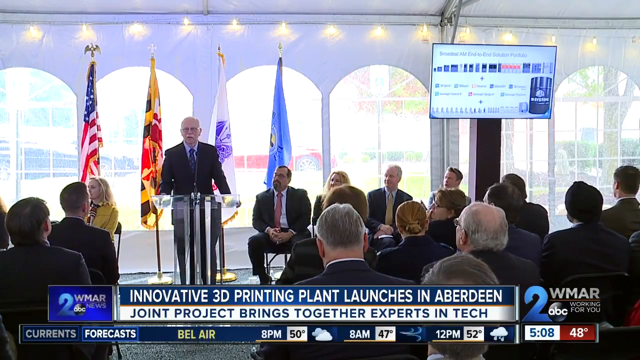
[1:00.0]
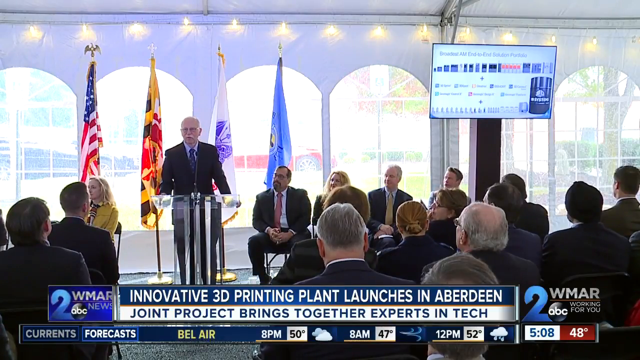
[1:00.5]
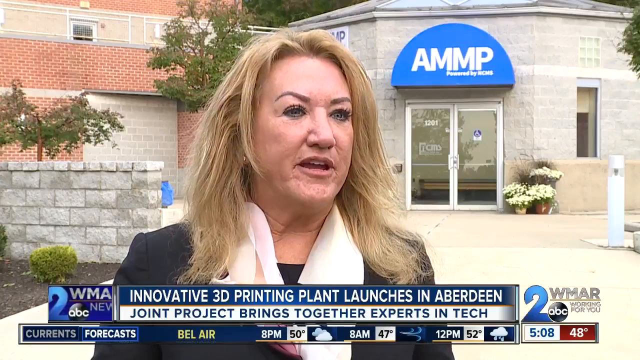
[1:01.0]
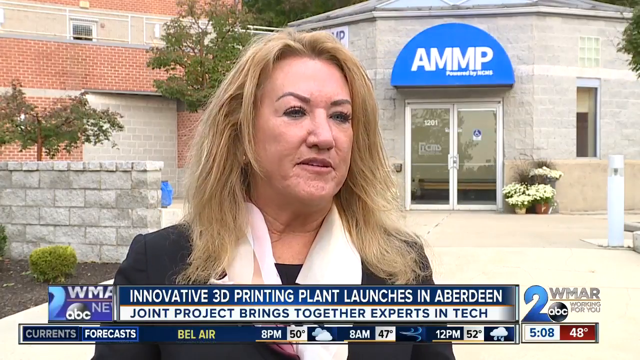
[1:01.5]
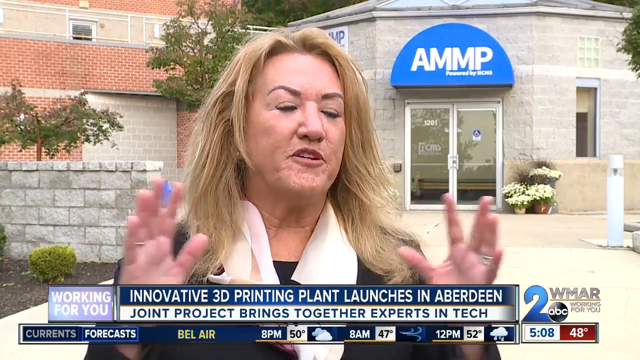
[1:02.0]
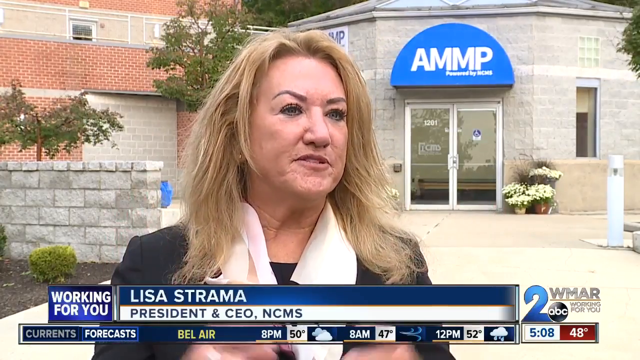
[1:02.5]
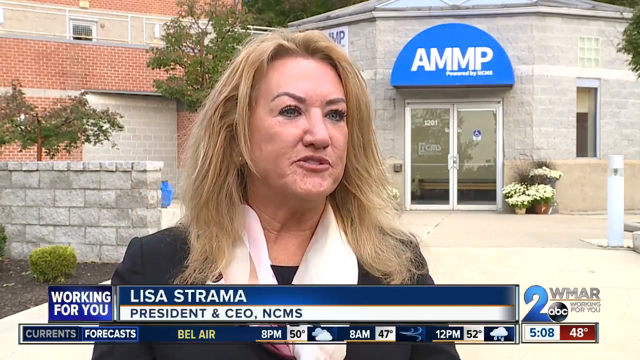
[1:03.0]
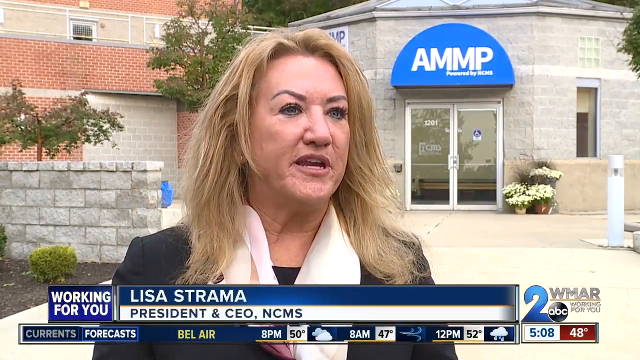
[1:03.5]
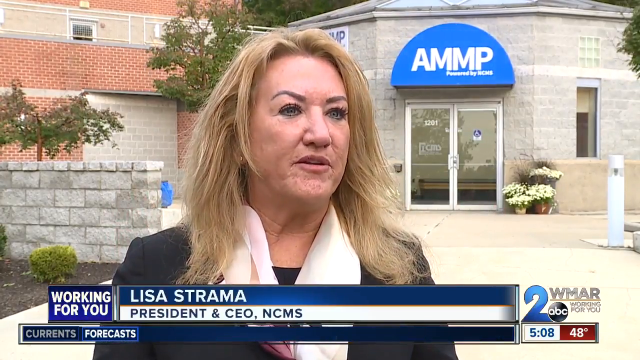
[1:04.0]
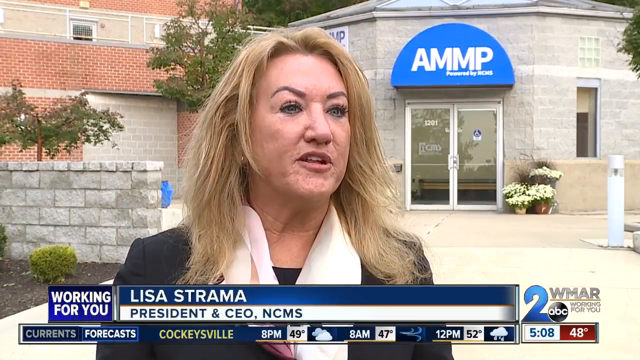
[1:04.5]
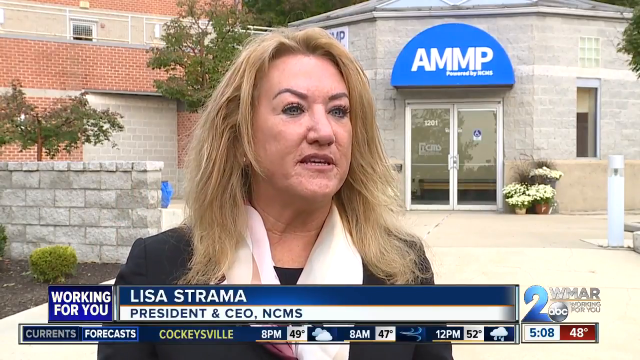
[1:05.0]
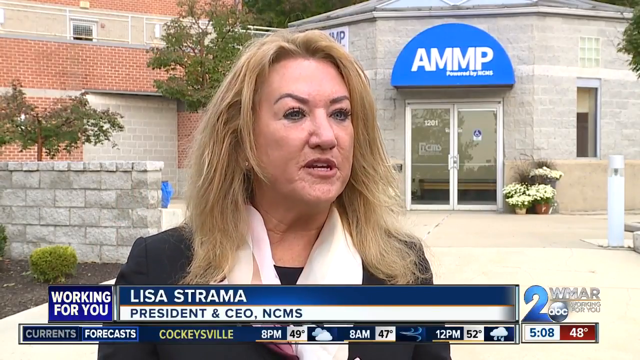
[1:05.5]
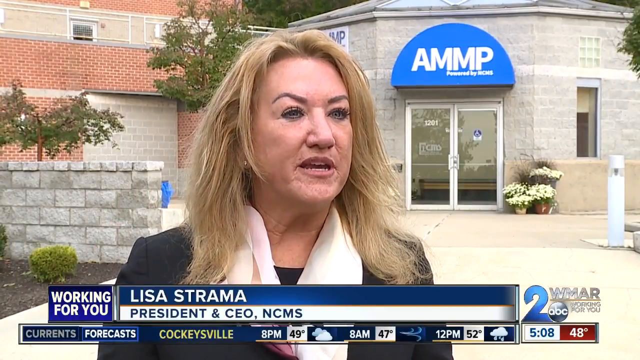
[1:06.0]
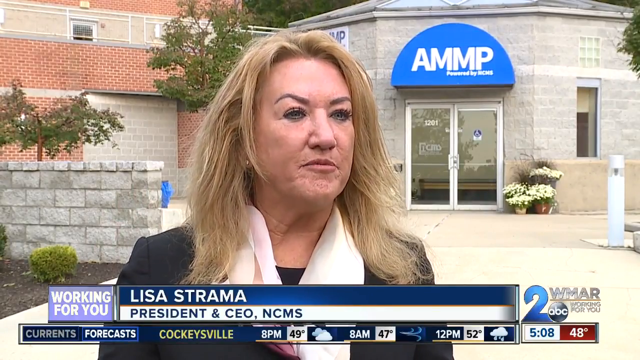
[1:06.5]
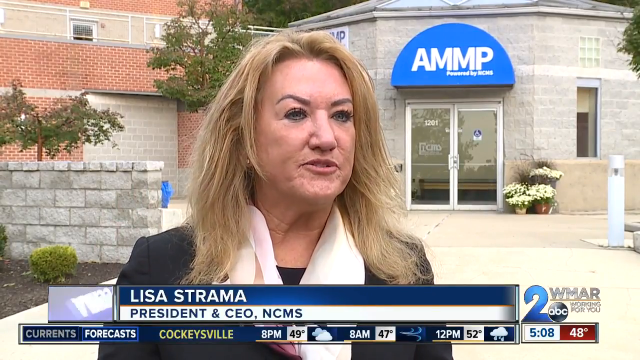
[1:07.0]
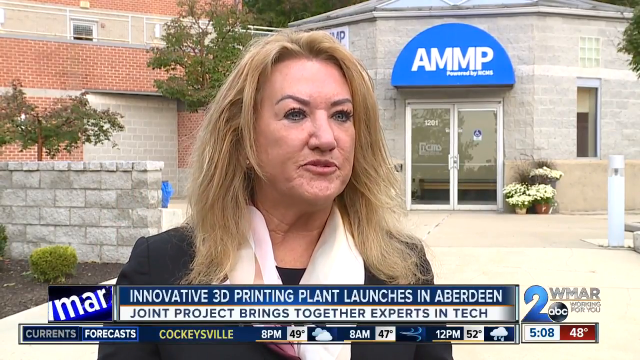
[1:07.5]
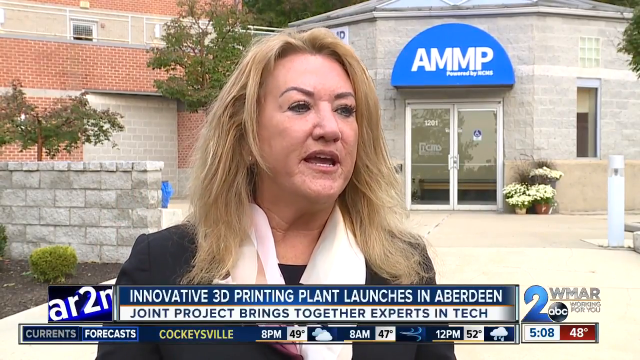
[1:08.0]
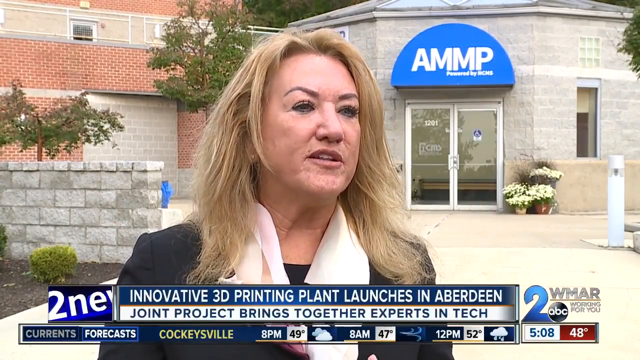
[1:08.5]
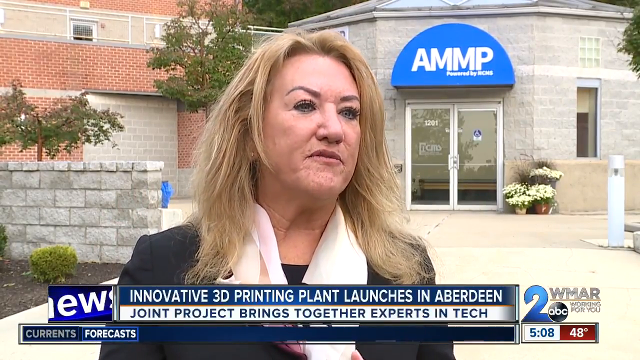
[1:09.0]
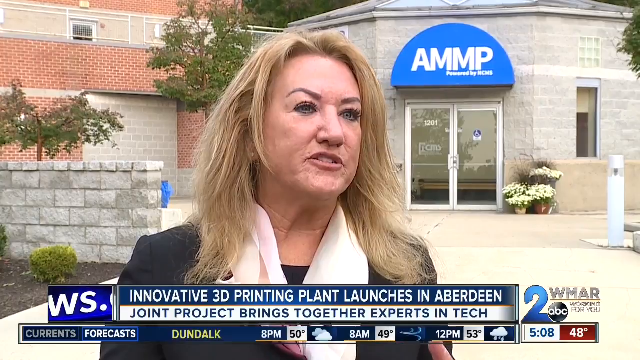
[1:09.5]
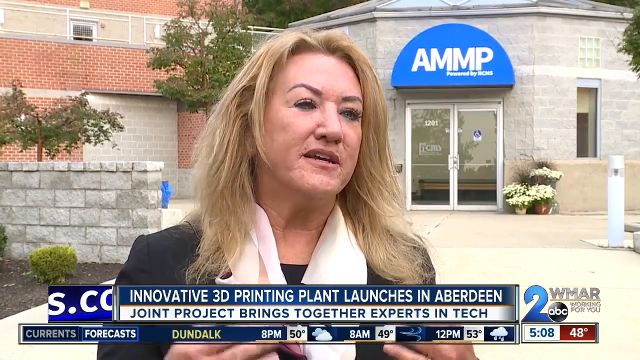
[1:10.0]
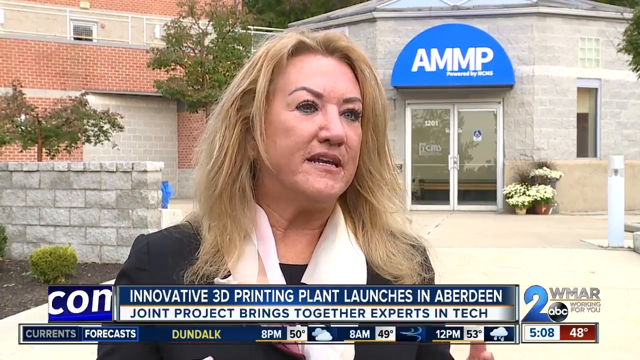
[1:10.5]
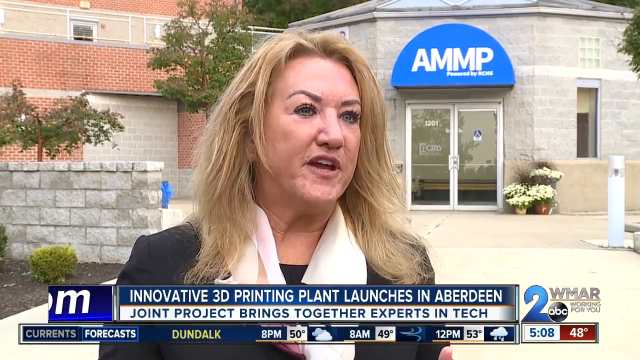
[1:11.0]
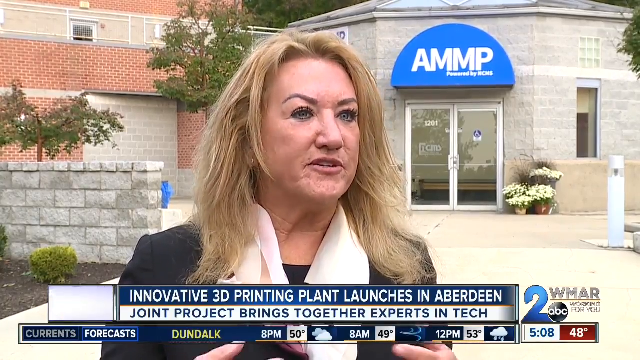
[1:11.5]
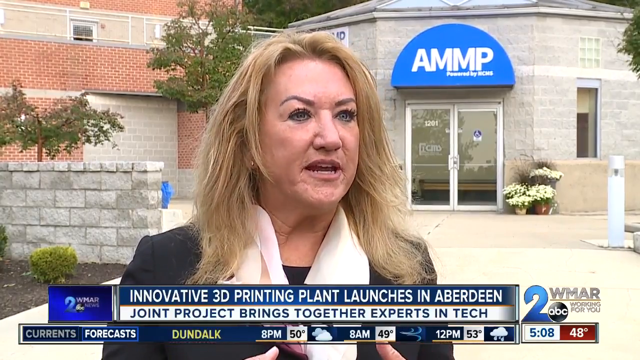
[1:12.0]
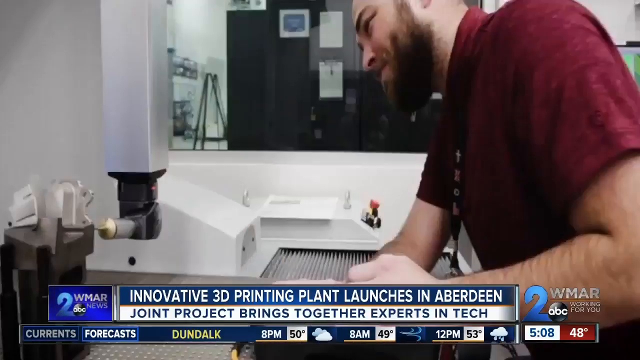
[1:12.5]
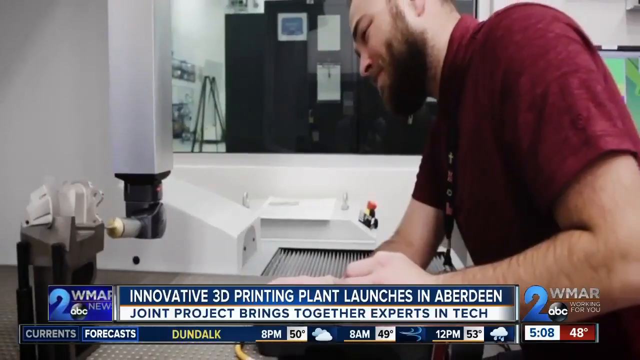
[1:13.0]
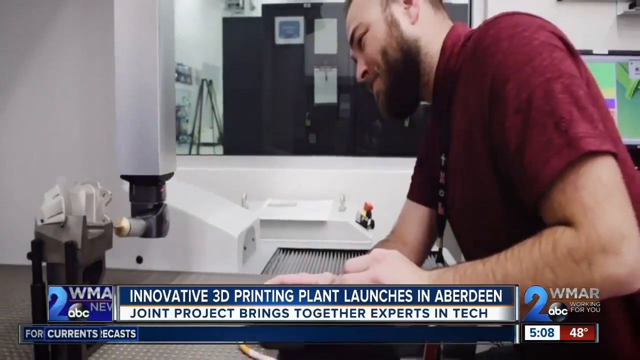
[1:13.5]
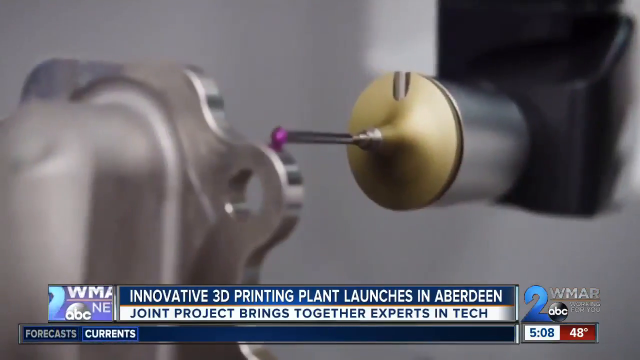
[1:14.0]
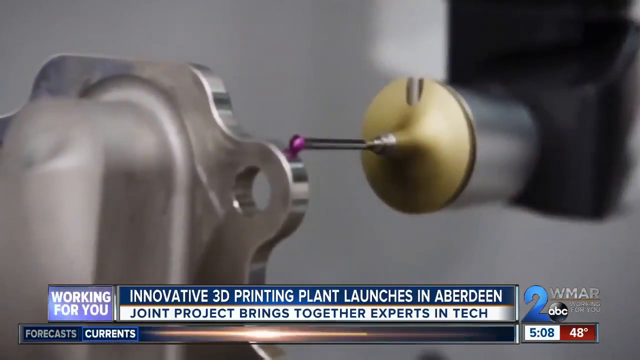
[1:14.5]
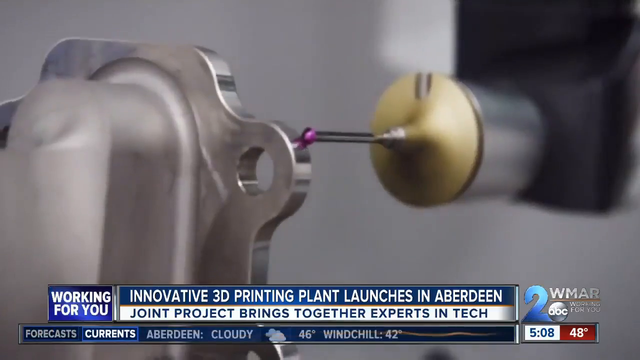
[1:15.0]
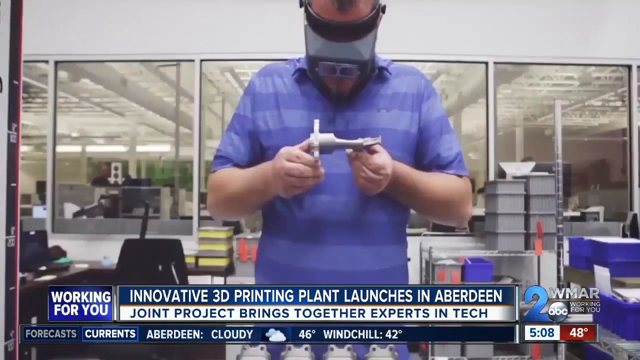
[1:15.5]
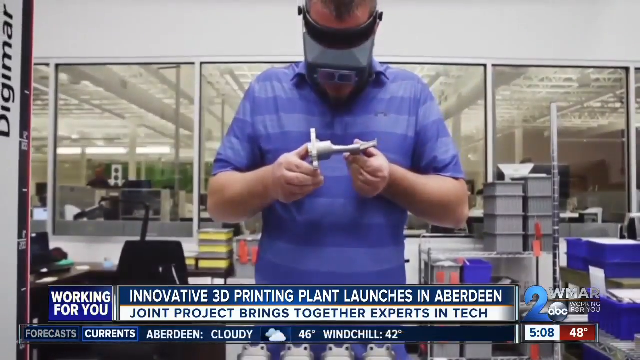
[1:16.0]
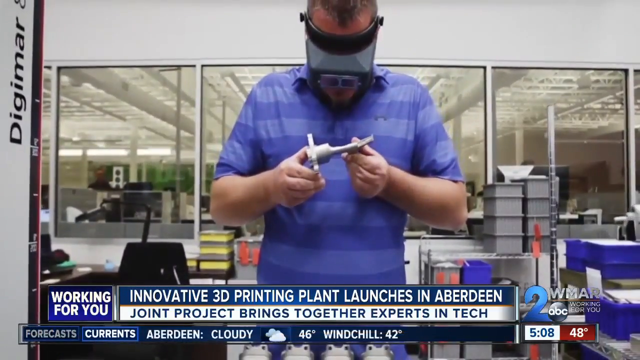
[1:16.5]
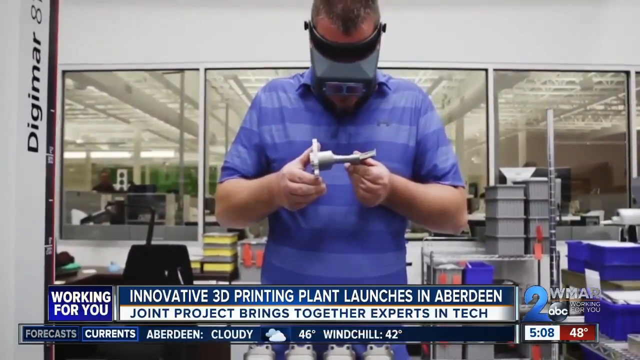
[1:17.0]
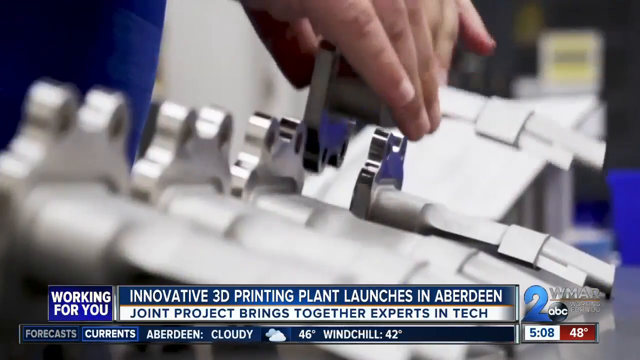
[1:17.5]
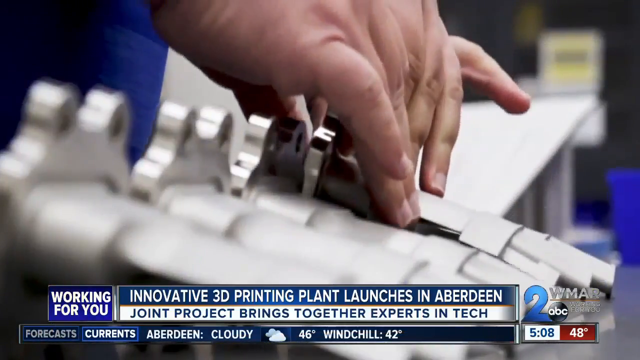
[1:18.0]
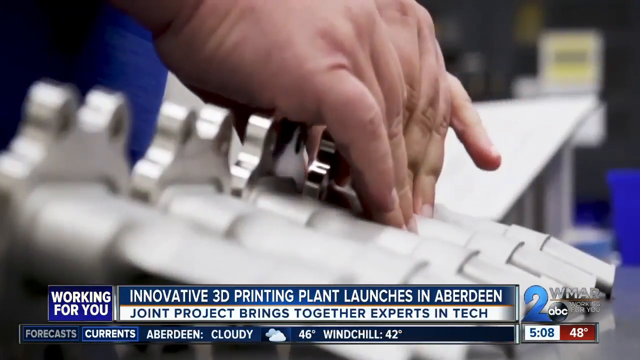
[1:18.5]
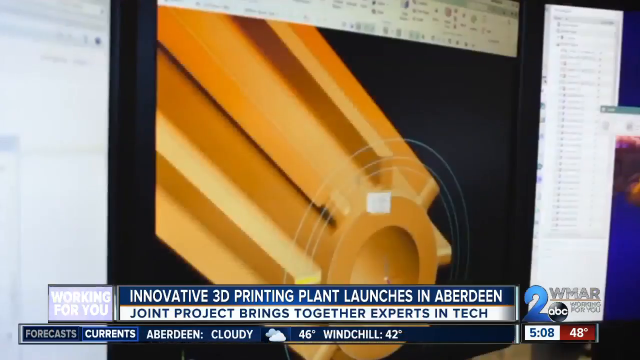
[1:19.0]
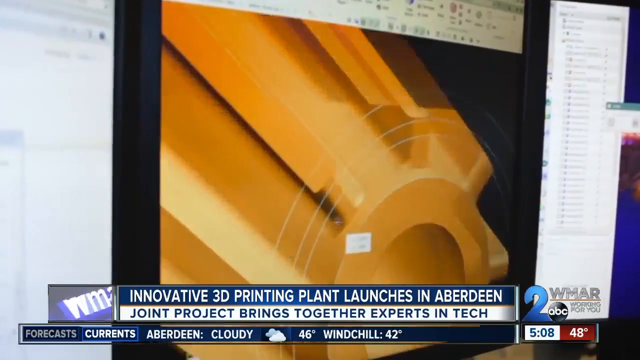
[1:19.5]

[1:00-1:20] Outside, reporter Mark Roper of Channel 2 WMAR ABC News interviews Lisa Strauma, president and CEO of NCMS. They stand in front of a building whose face is made of cement blocks, with a portion of red bricks, and which has a blue awning with the white letters AMMP. Lisa wears a business suit, a scarf and a black blouse, and is confident in her replies. The scene transitions inside, where tools work on stainless steel objects. A man inspects one of the objects and then places it down next to several more of the same stainless steel objects, which look like they will be used in machinery. The man wears goggles like a welder's and a blue t-shirt. The room looks like it has computers as well; no machinery is visible, but a rack holds a lot of equipment or pieces that look manufactured, and the place looks like it could be a factory. A view of the room shows large glass windows and open space.